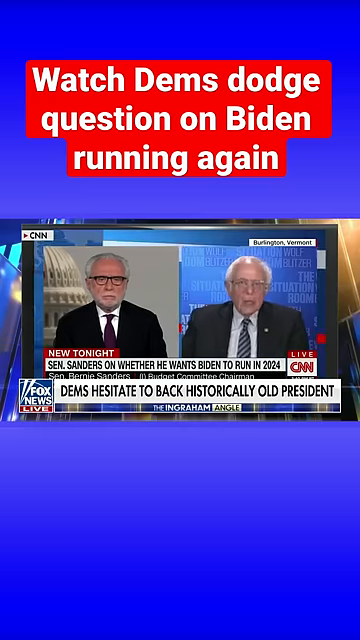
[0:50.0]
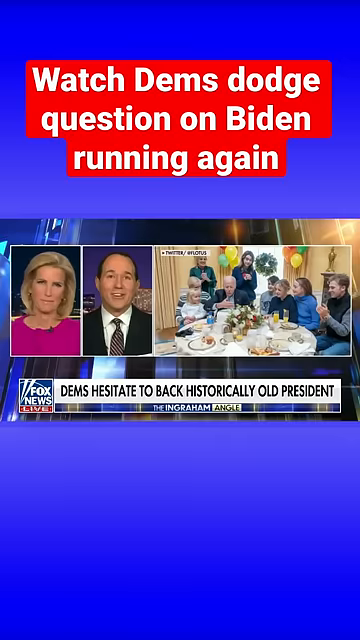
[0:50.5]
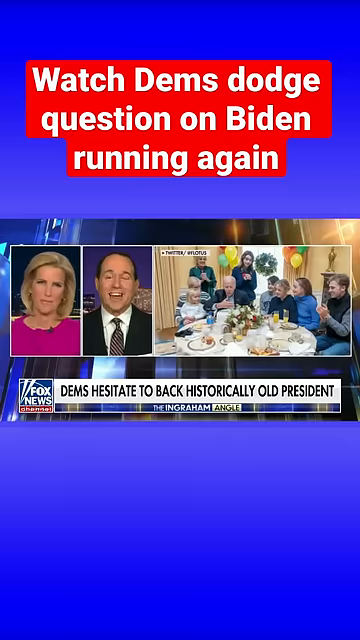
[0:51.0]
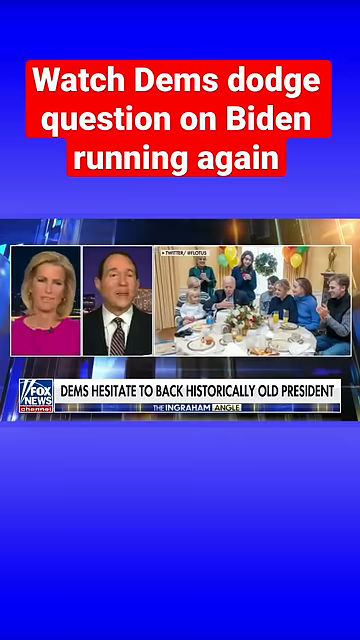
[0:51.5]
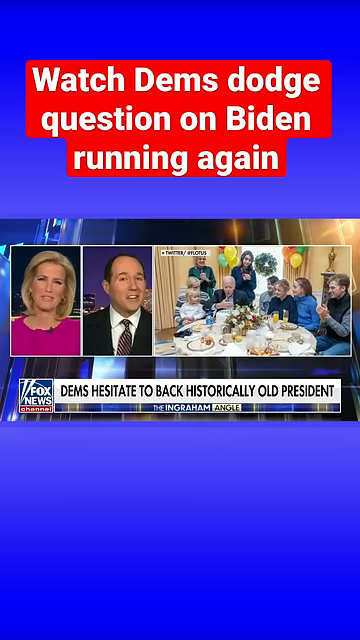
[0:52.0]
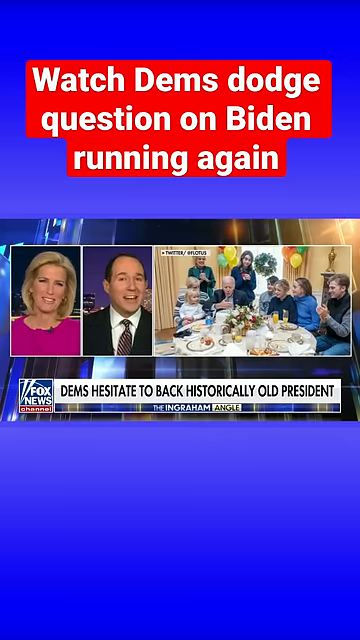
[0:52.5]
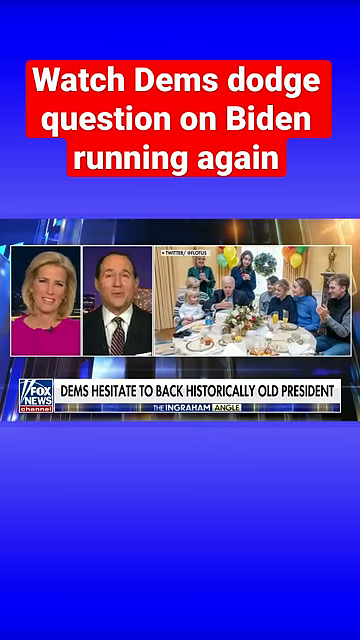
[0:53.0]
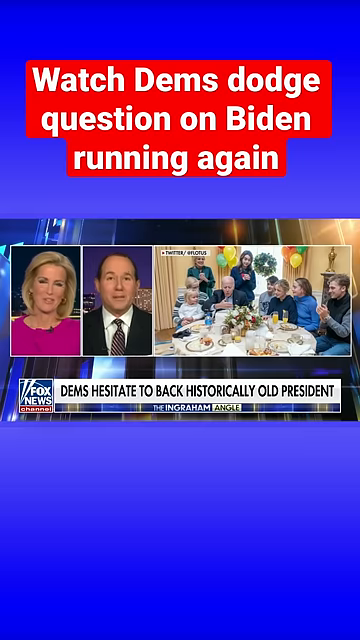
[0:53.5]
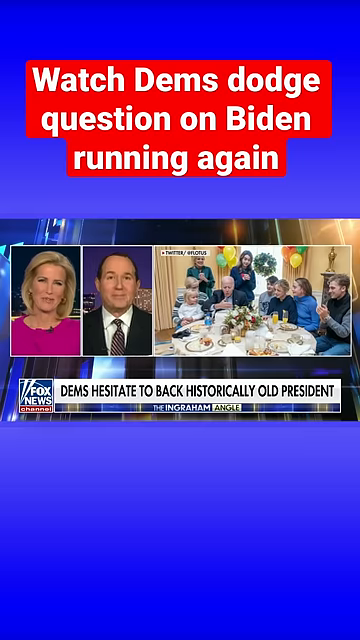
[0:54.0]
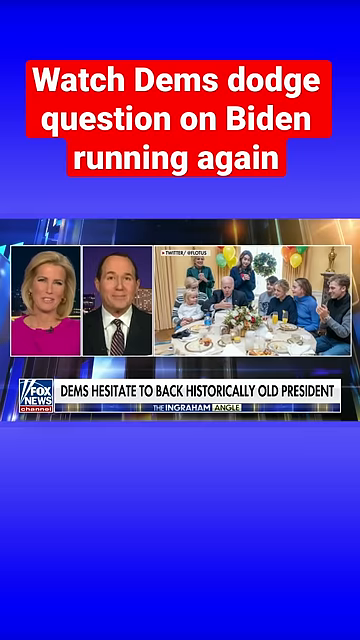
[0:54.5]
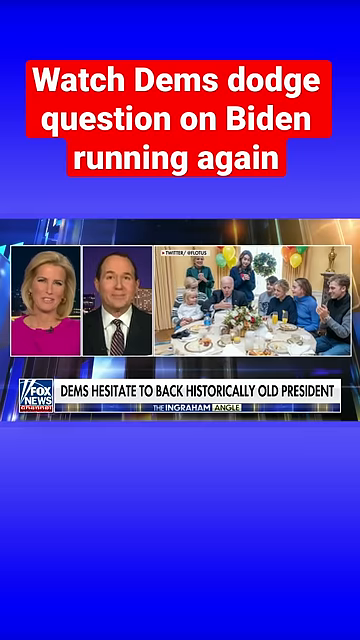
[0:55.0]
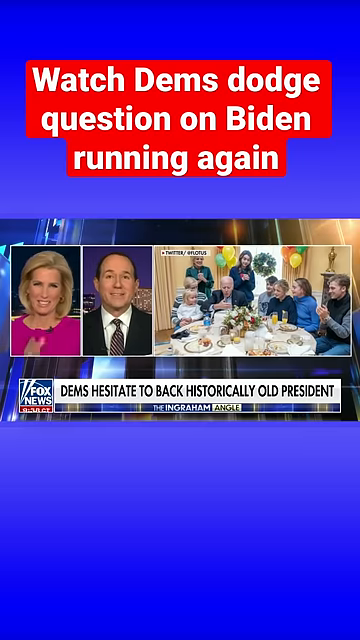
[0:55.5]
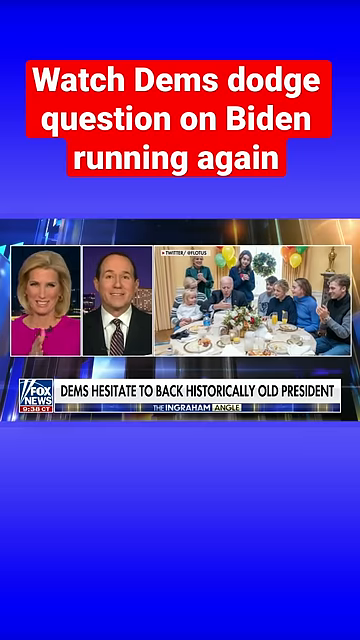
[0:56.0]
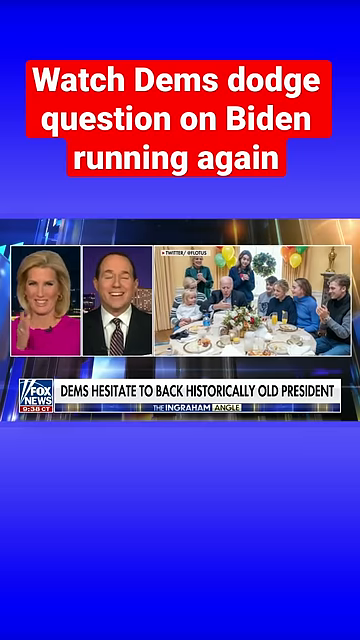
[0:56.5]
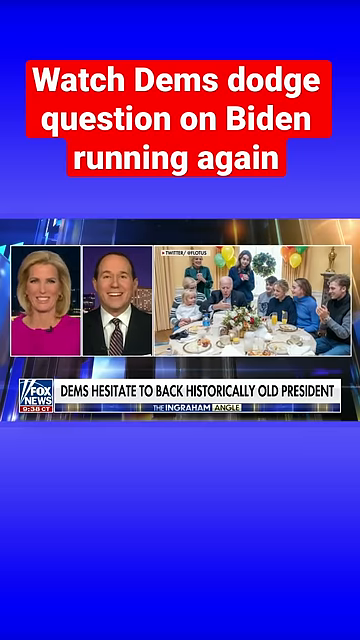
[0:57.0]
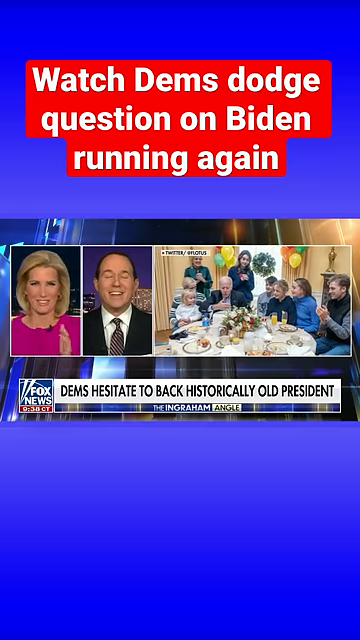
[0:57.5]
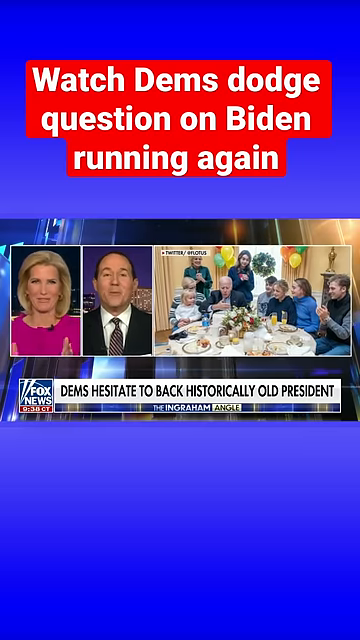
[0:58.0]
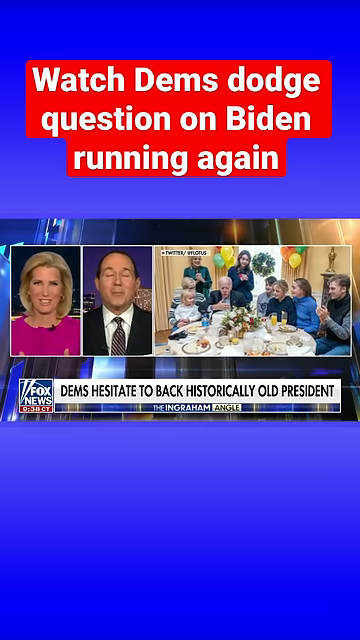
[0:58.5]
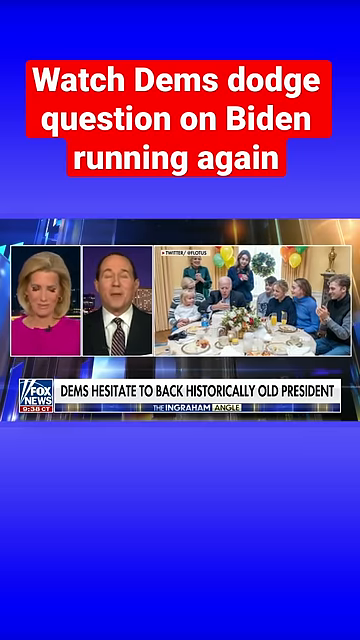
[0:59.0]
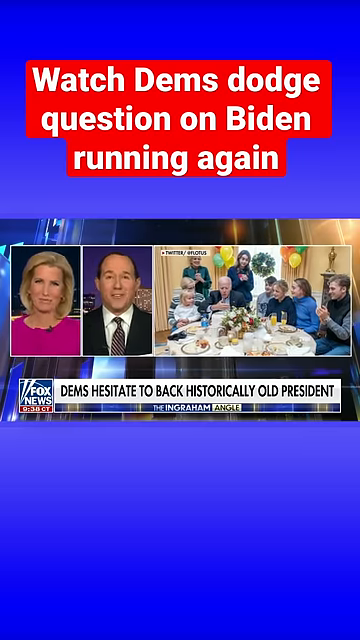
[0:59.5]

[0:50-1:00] The text "Dems hesitate to back historical president" appears. The video returns to the Fox News anchors, a woman and a man, who laugh a little, and Joe Biden is apparently shown at his birthday party.